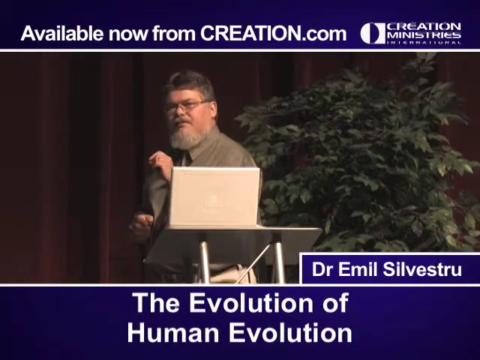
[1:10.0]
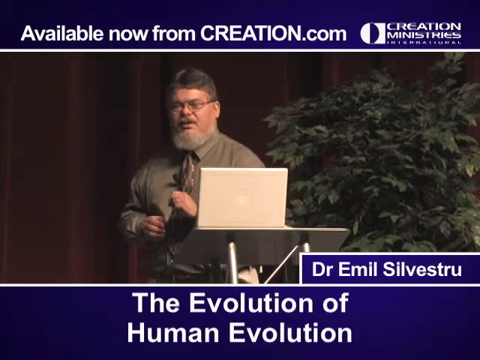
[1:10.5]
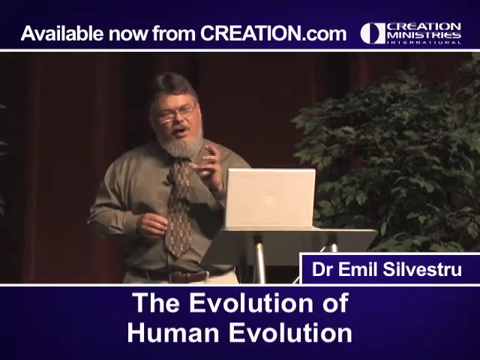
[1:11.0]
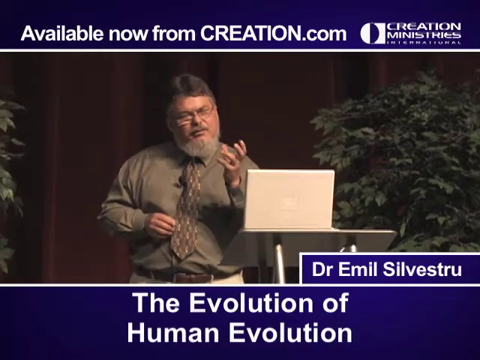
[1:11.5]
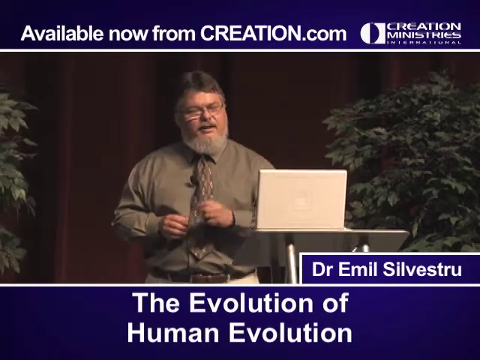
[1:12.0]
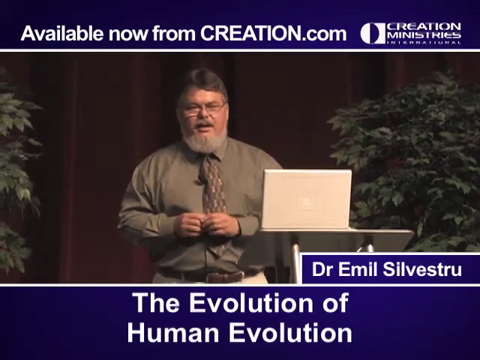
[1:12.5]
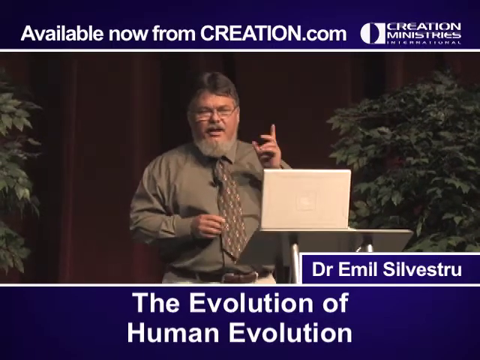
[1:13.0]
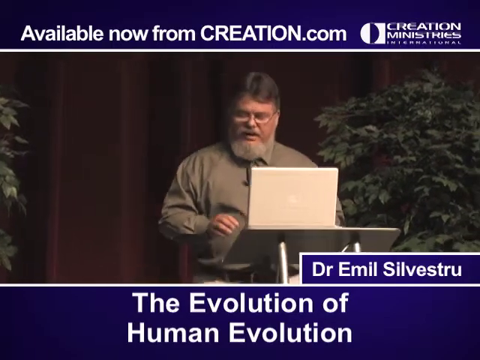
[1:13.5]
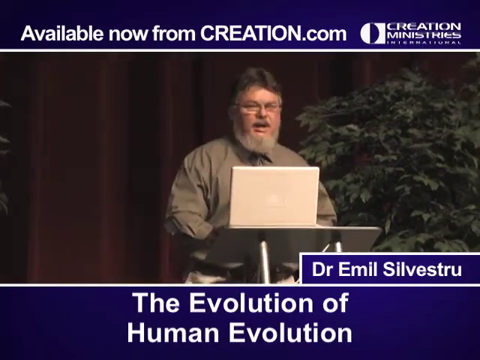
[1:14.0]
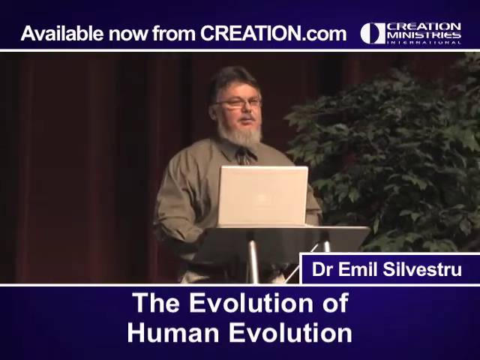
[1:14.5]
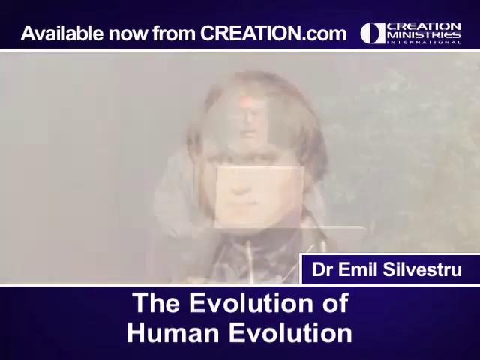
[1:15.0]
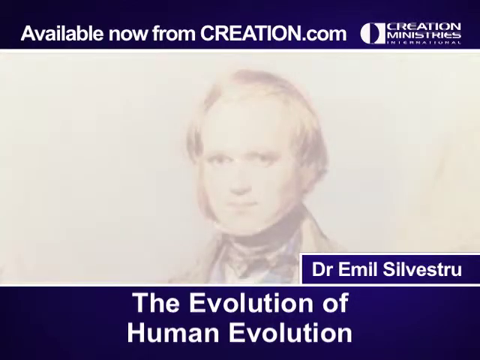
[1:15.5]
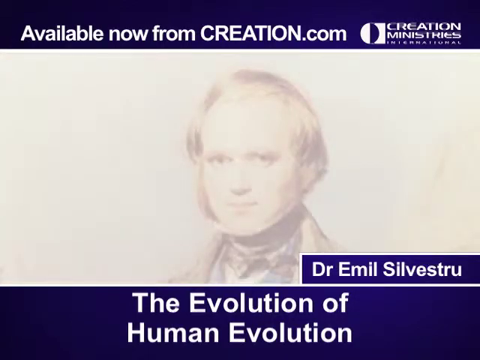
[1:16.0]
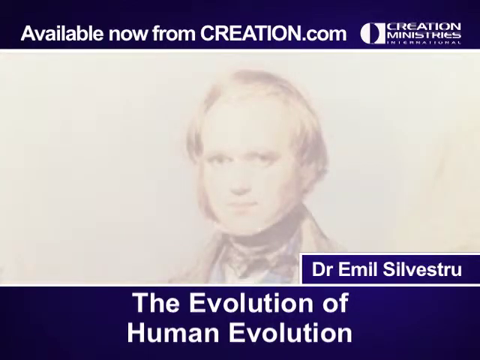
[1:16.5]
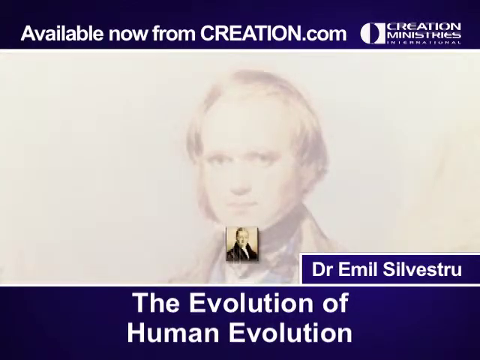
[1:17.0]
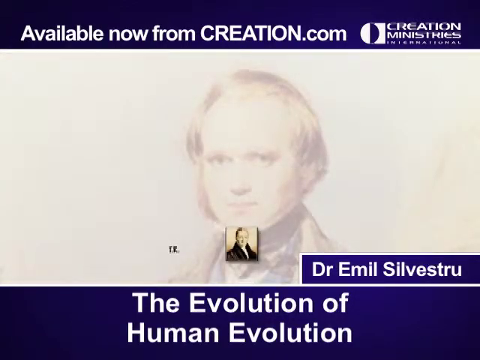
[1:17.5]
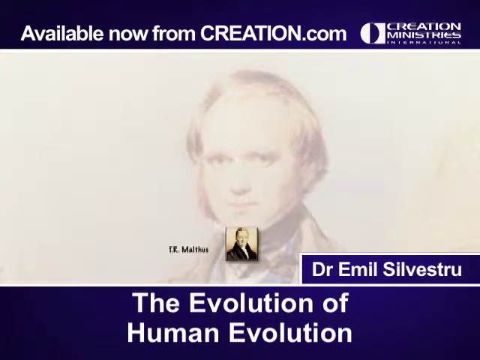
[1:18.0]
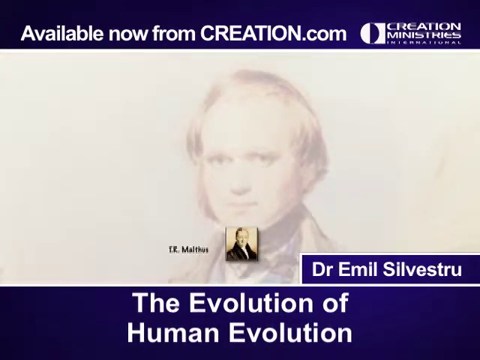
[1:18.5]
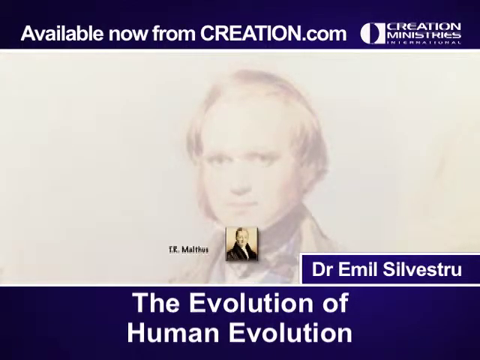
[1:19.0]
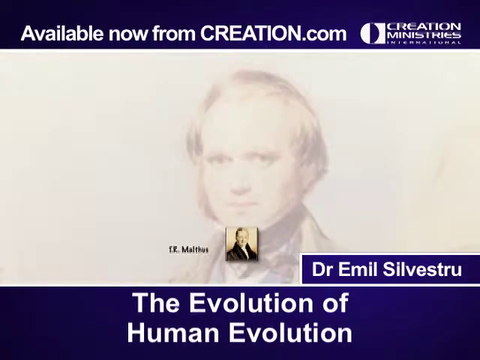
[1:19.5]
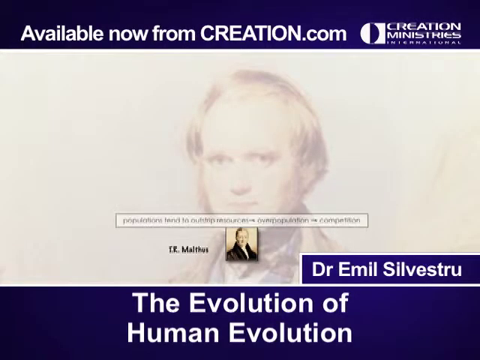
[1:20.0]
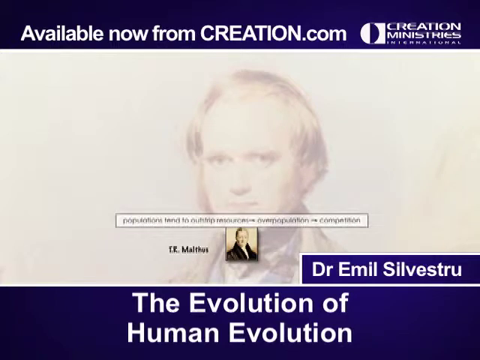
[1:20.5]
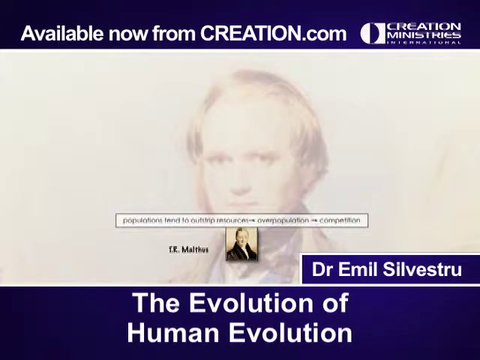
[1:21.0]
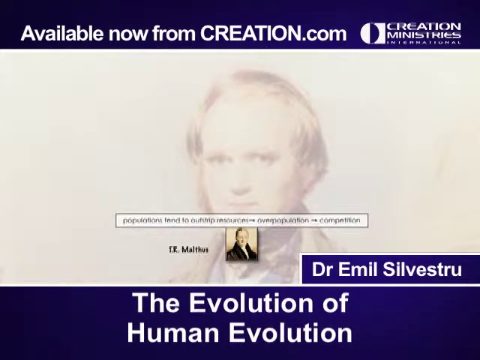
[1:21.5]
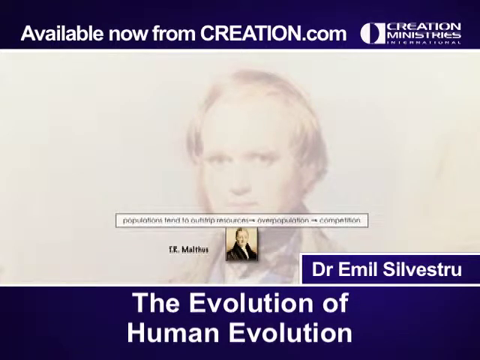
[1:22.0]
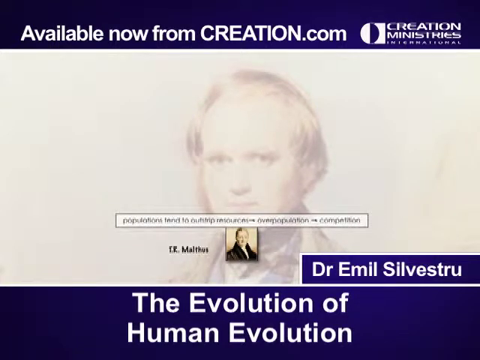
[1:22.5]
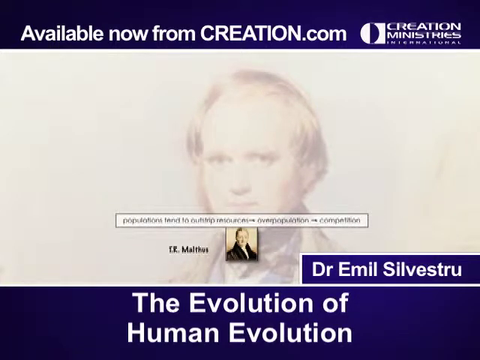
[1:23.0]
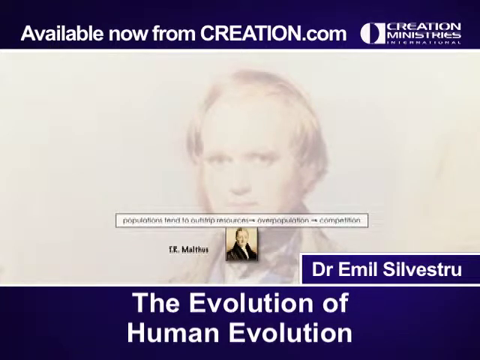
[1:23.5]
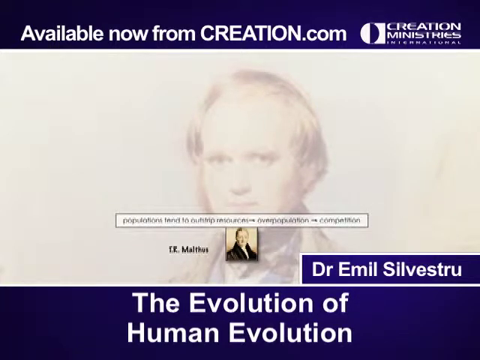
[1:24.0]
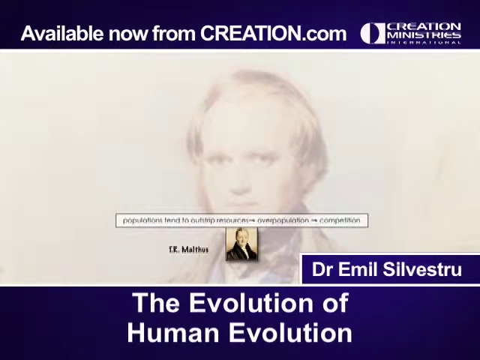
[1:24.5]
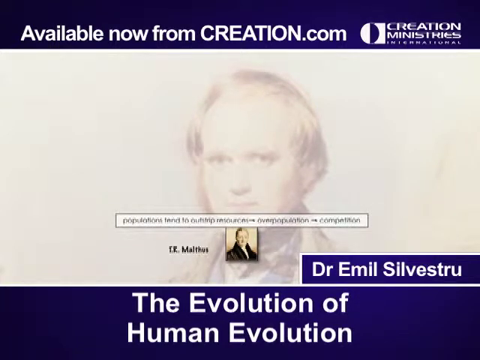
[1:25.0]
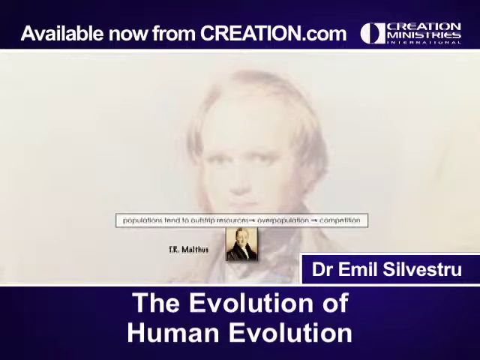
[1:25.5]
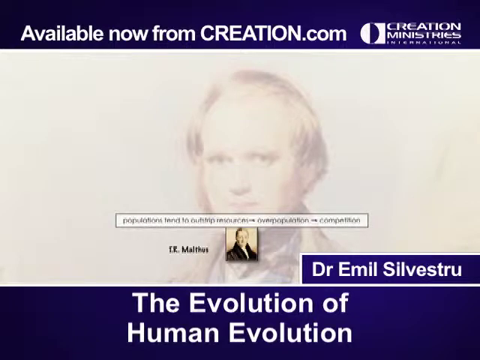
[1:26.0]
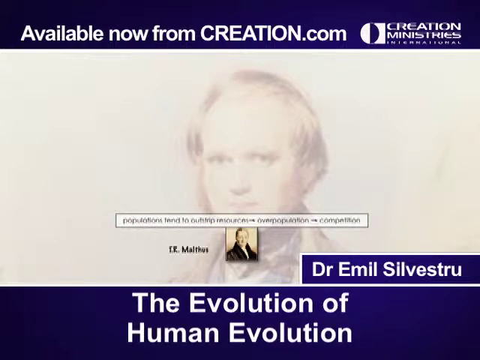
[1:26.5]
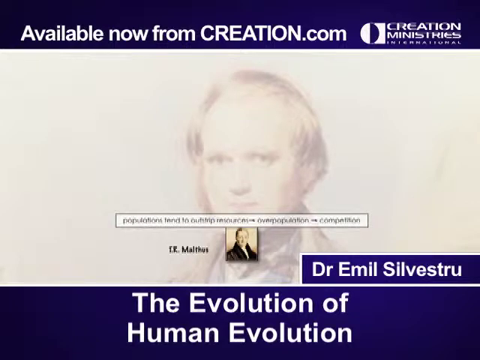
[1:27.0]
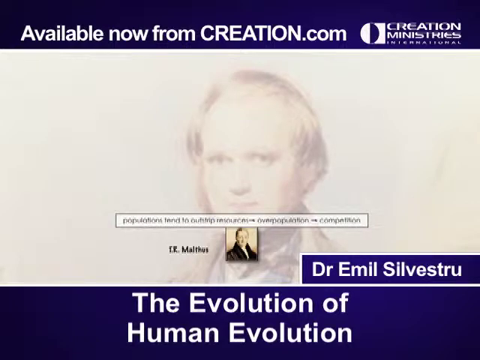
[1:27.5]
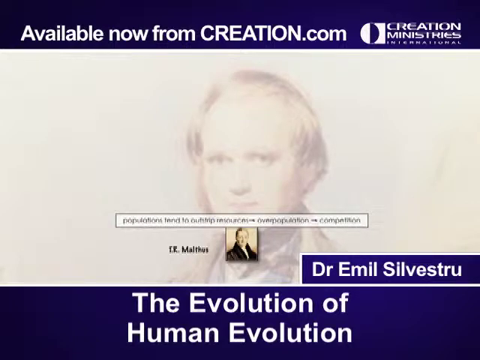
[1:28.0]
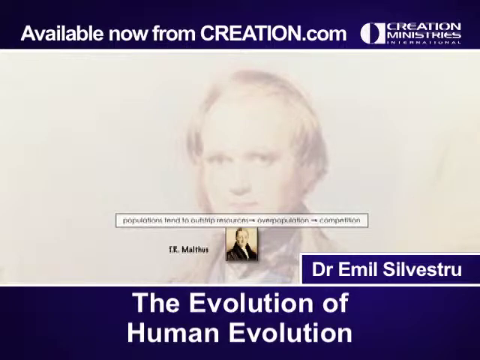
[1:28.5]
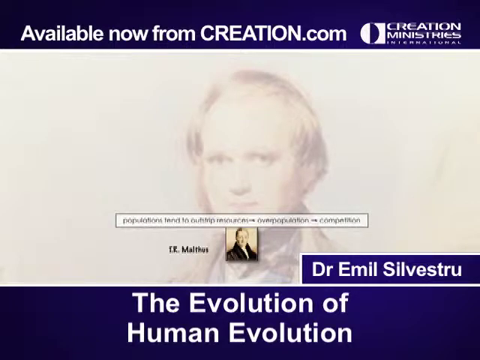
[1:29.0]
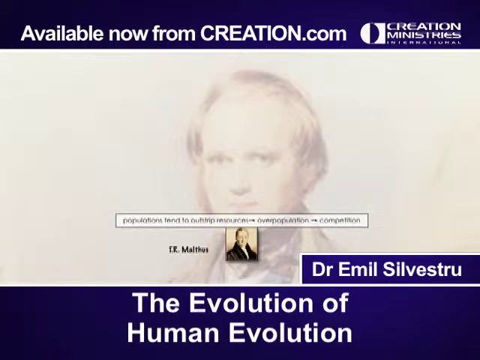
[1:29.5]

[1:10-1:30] The man continues talking and starts to walk back and forth a little as he speaks. He is wearing white jeans with a brown belt, and his shirt is more of a greenish khaki color than brown. His right hand is still holding something, maybe a clicker for a slide projector, while he holds his left hand up kind of like a claw, as if holding something to illustrate his point. He wears a wedding ring on his left hand and makes different gestures with that hand as he speaks, at one point pointing up at the sky. Next comes an illustration of a man who looks like he is from the 1800s or so, judging by his style of dress: he has kind of a neck collar, kind of a high-collar coat, and very big sideburns. Text appearing over it, seemingly a quote, reads "populations tend to outstrip resources, which leads to overpopulation, which leads to competition." What looks like a person's name is under it, but it is hard to read.